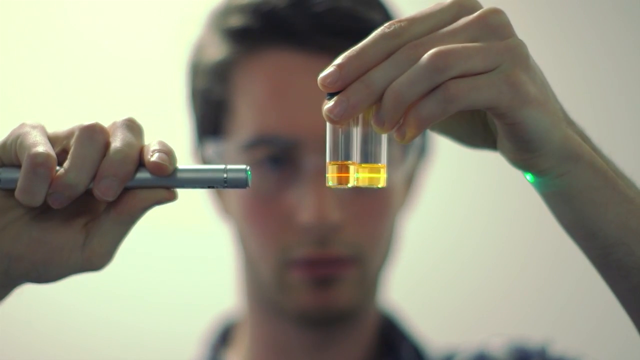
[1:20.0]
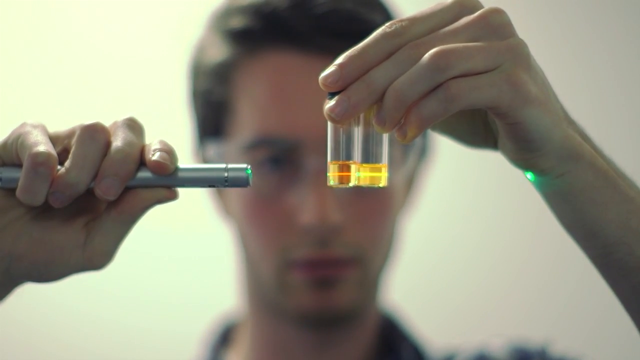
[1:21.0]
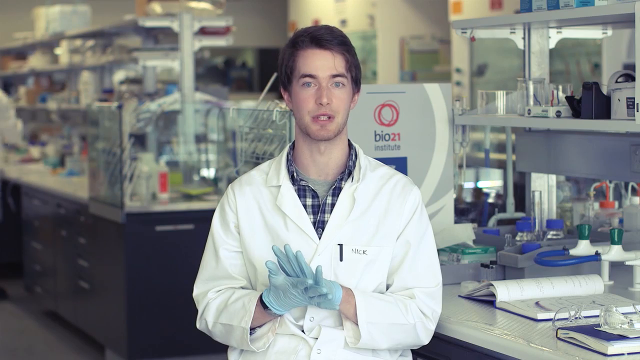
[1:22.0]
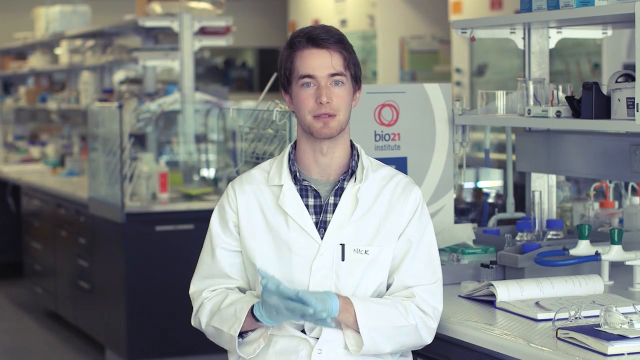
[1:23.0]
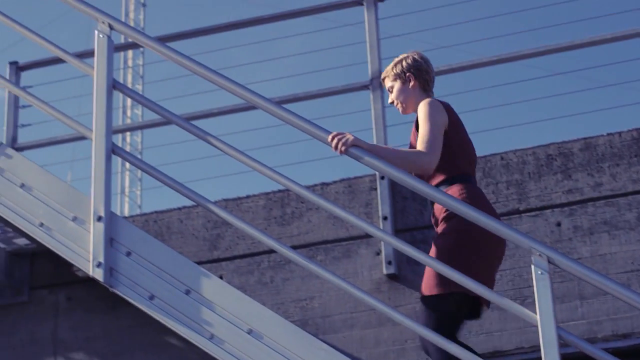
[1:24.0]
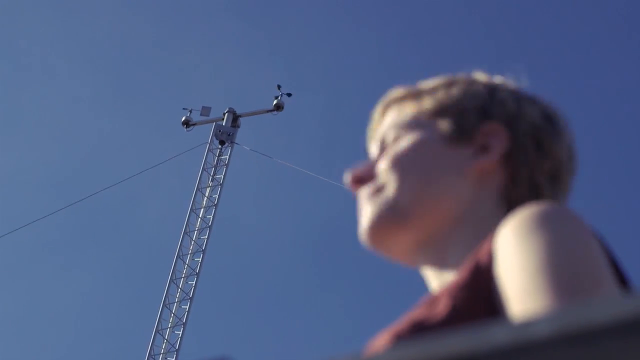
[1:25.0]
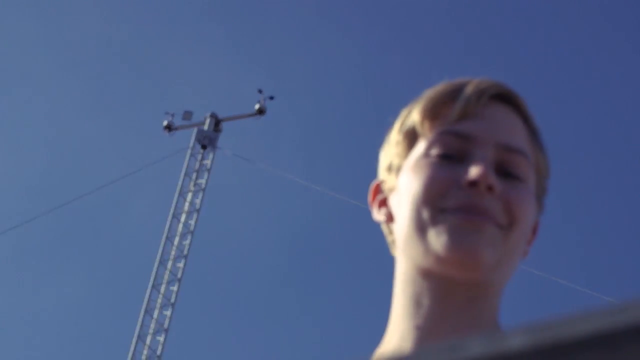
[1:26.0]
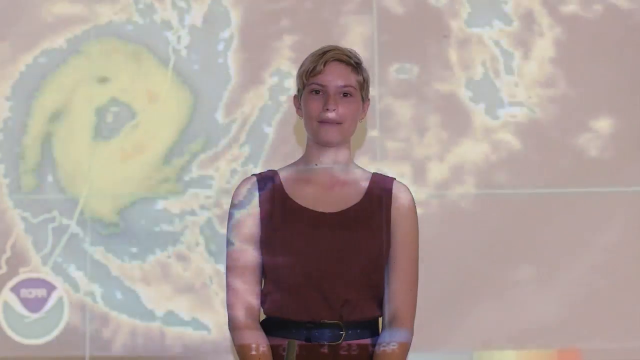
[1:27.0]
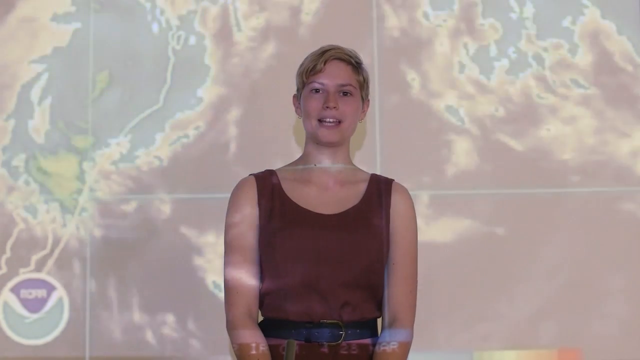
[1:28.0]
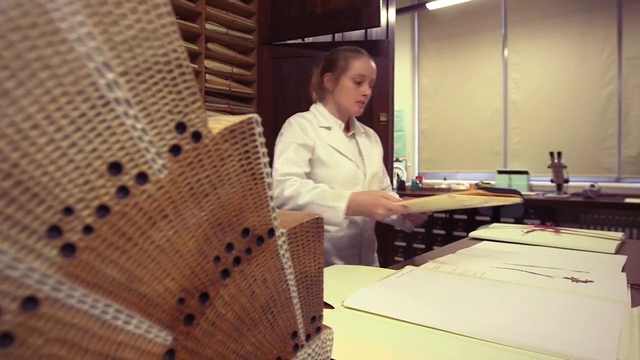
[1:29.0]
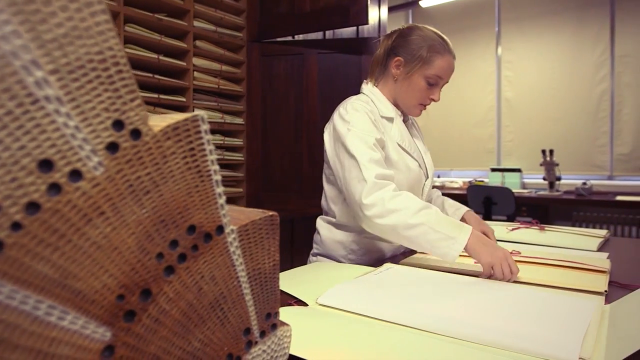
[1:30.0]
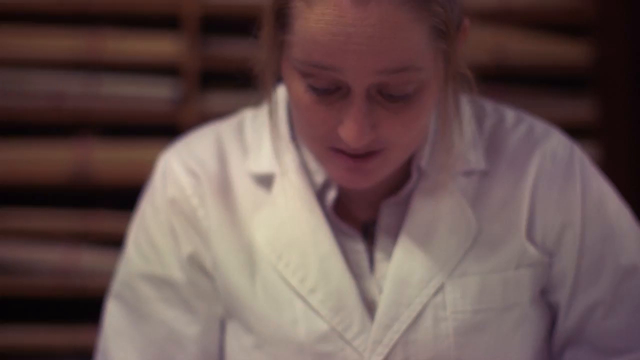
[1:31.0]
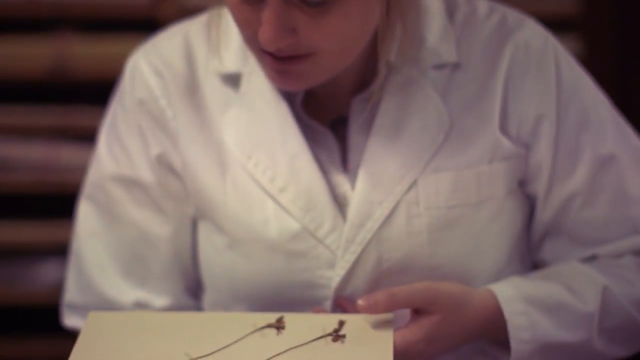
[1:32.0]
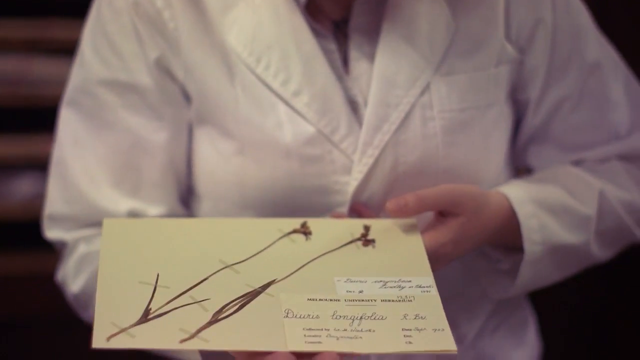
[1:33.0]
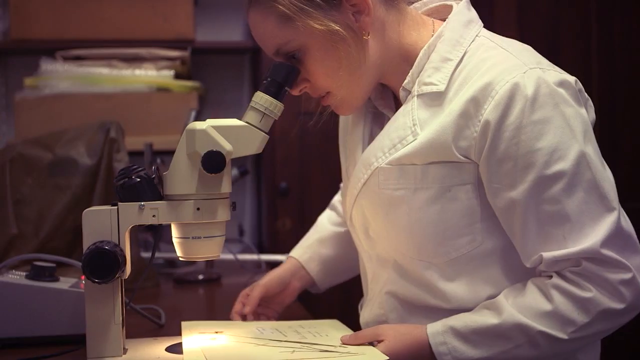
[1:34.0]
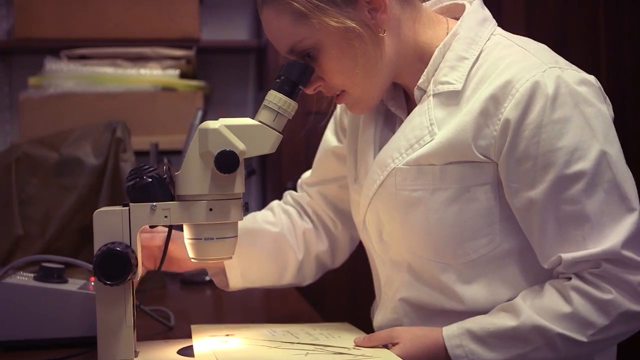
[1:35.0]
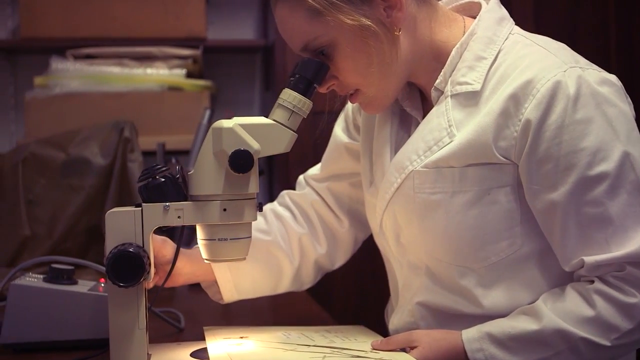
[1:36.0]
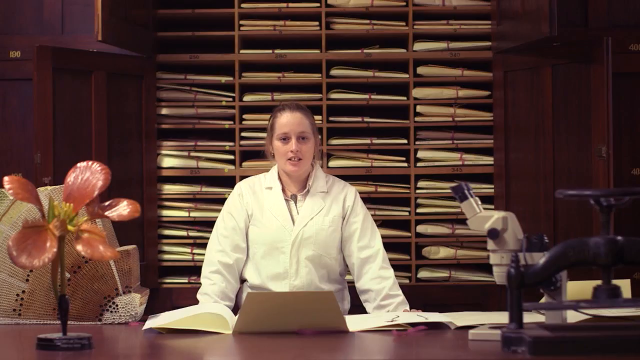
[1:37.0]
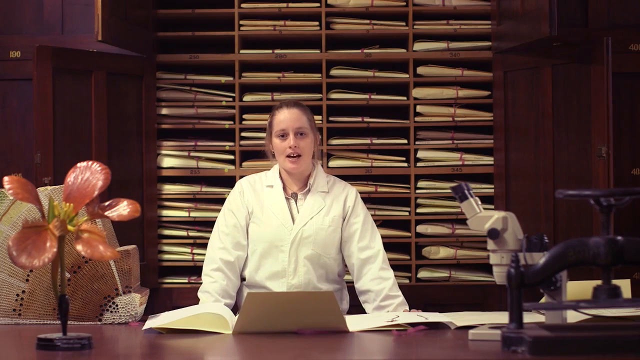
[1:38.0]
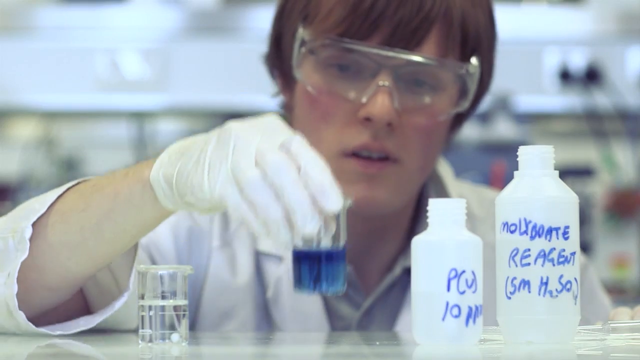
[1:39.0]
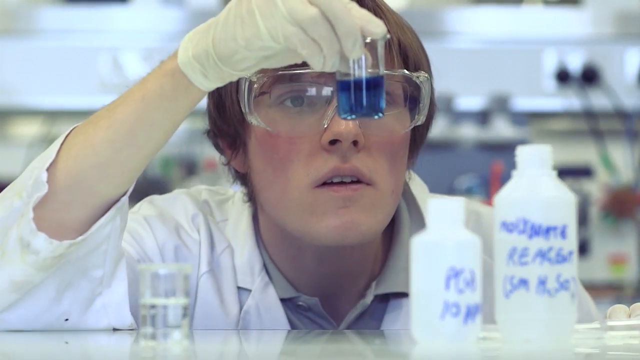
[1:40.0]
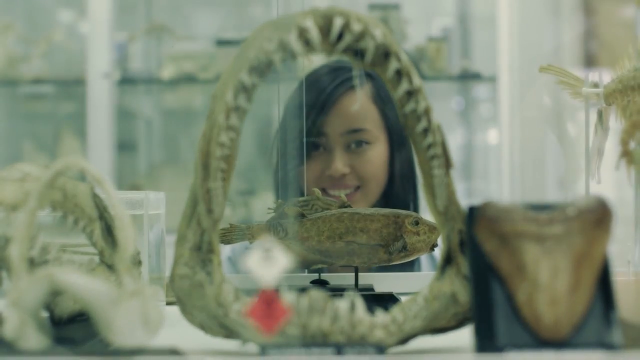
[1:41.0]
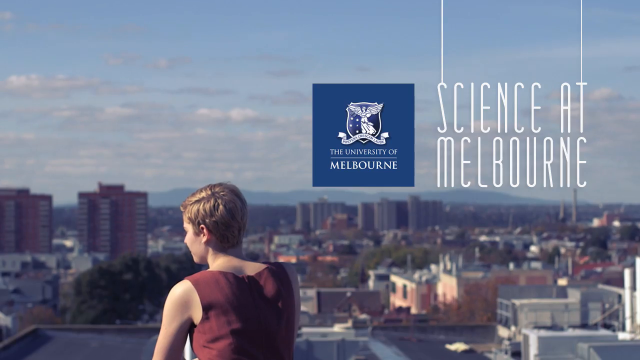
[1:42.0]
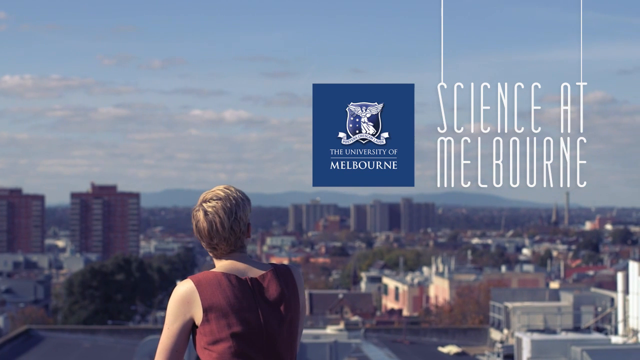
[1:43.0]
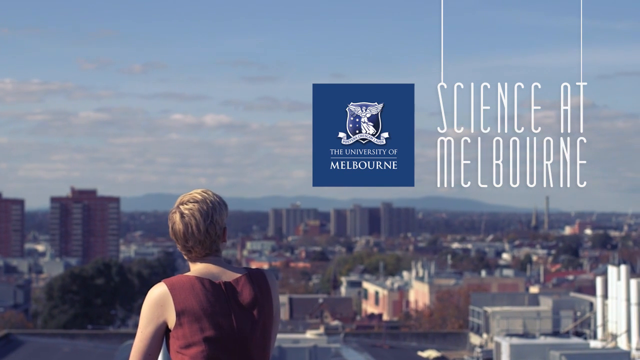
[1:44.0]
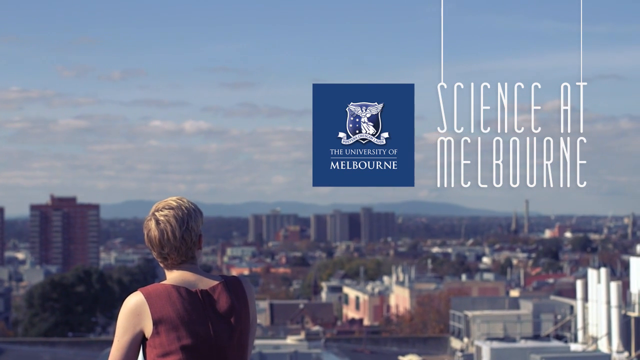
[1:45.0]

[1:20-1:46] The student is seen clearly in a white lab coat, with the blue and white flannel shirt under it and a gray undershirt. He is in the lab, with rows and rows of beakers and other lab equipment, and an open book to his right. He isn't wearing the glasses. A young woman with short hair walks up a flight of stairs, wearing what looks like a red dress resembling a tank top, with a black belt. She is again seen speaking to the camera with what looks like a hurricane projected on her. A woman in a white lab coat appears to be putting samples on a piece of paper and looks under a microscope; she is apparently a botanist. All of the students are shown again, followed by "University of Melbourne, Science at Melbourne". A woman with short blonde hair is seen from behind, from her back to the top of her head, on the left of the frame, overlooking the city and all of its buildings on a clear day with a few clouds in the sky.